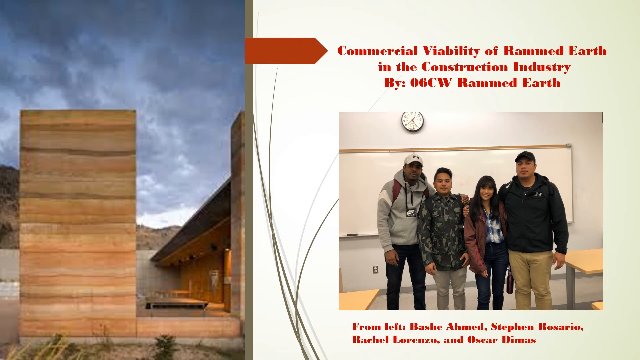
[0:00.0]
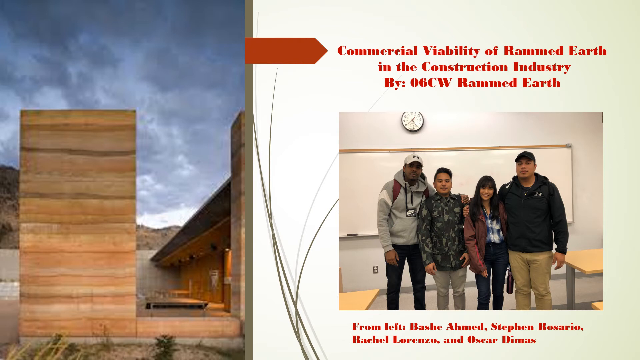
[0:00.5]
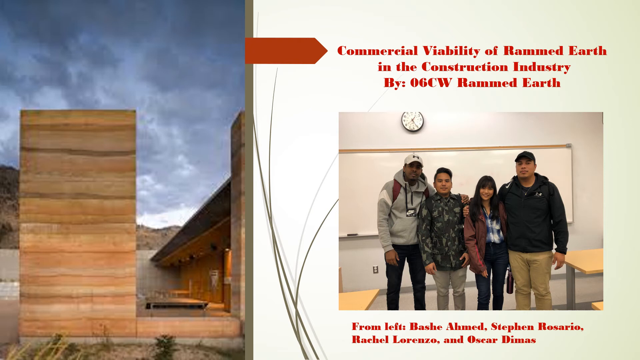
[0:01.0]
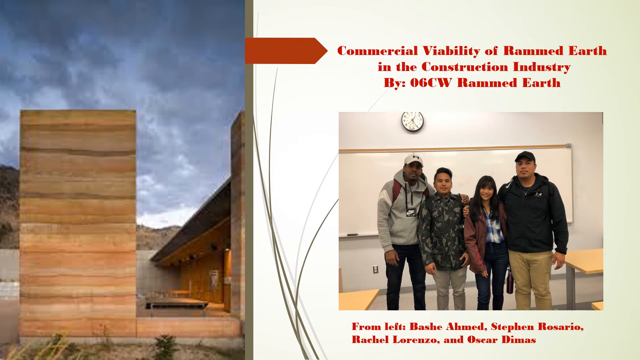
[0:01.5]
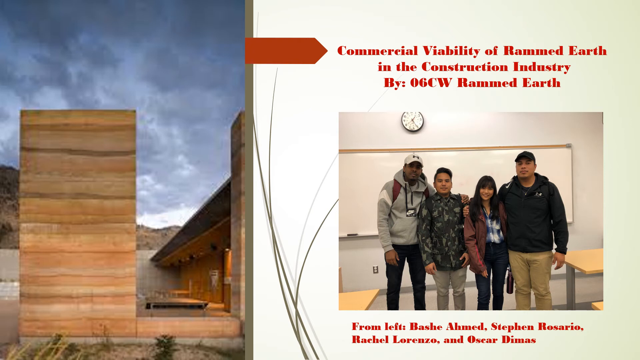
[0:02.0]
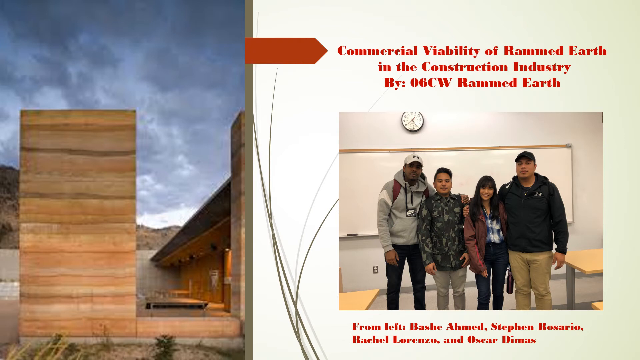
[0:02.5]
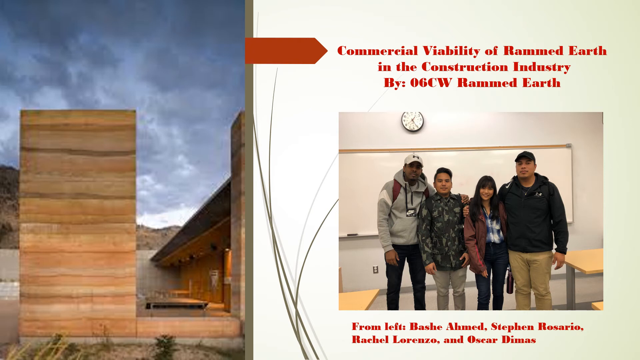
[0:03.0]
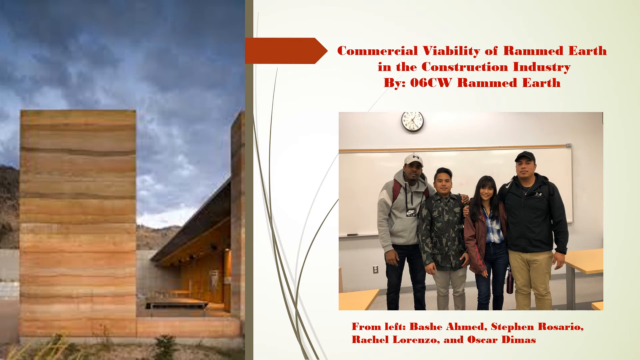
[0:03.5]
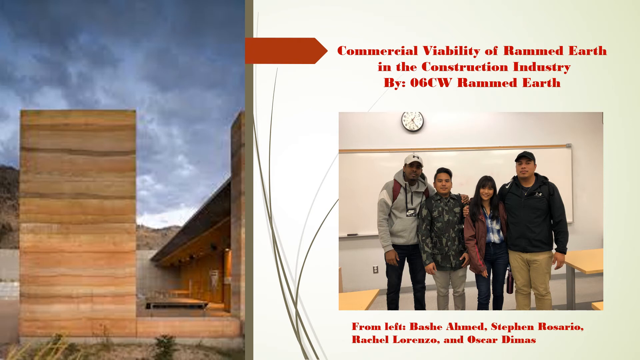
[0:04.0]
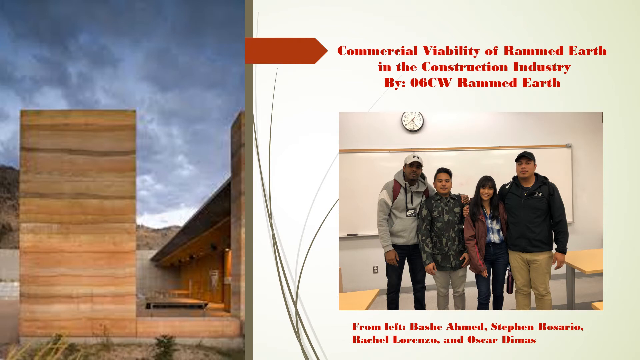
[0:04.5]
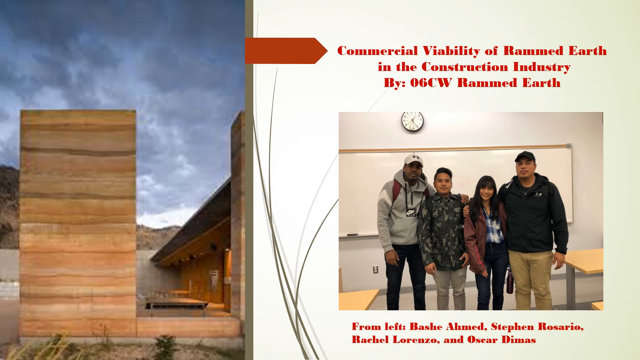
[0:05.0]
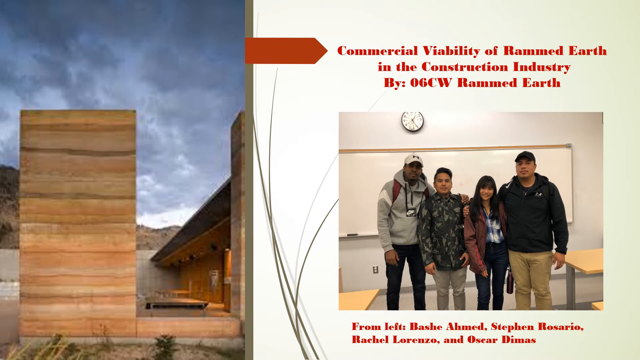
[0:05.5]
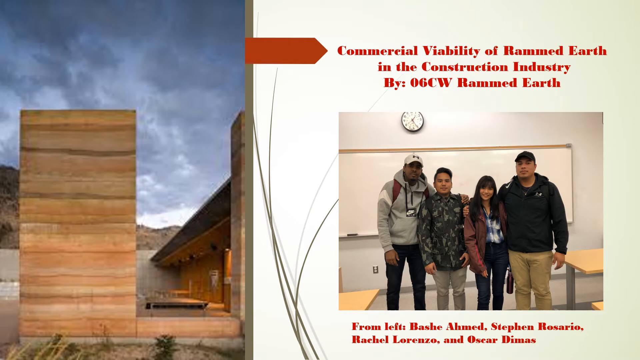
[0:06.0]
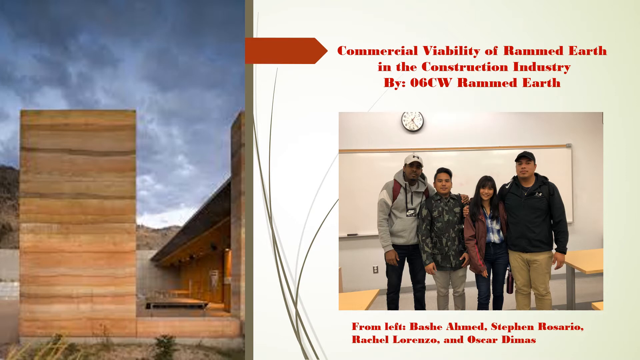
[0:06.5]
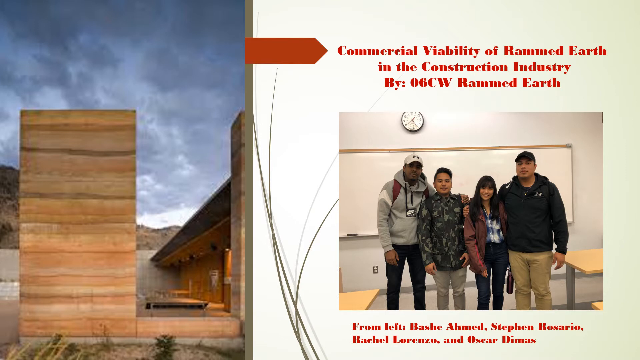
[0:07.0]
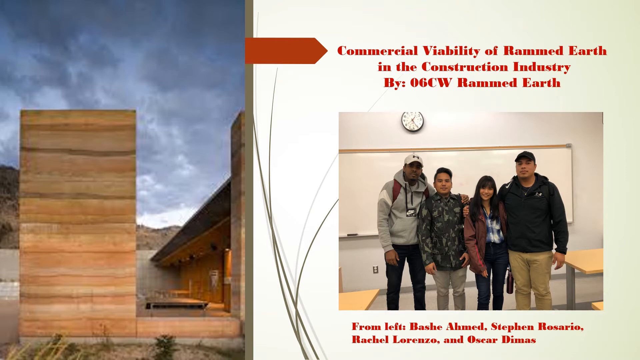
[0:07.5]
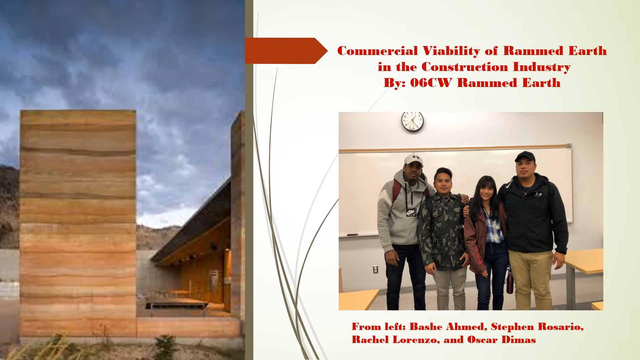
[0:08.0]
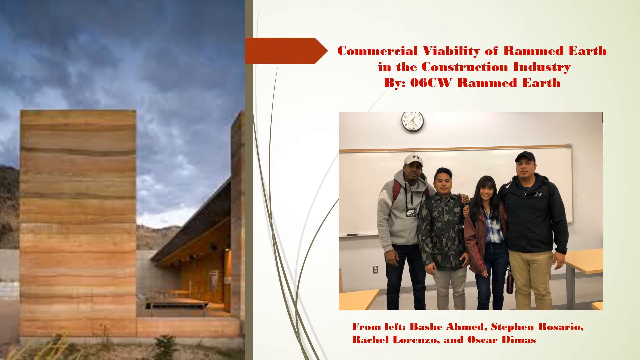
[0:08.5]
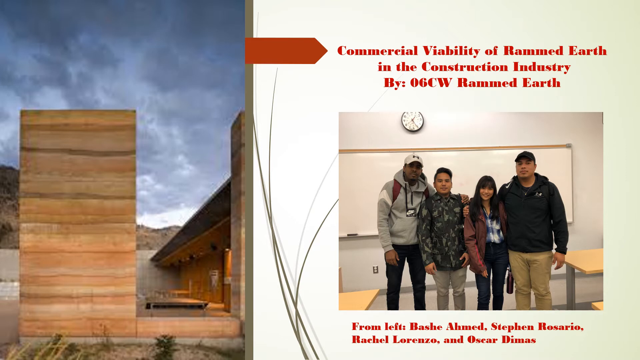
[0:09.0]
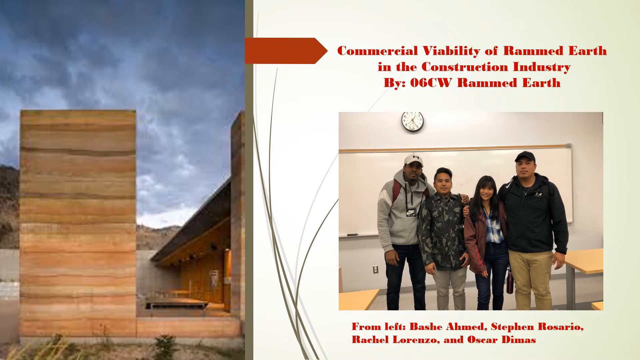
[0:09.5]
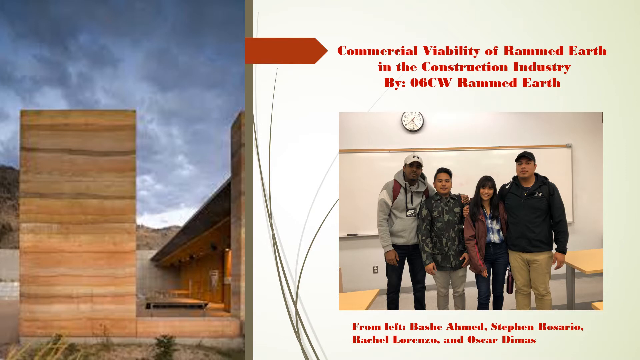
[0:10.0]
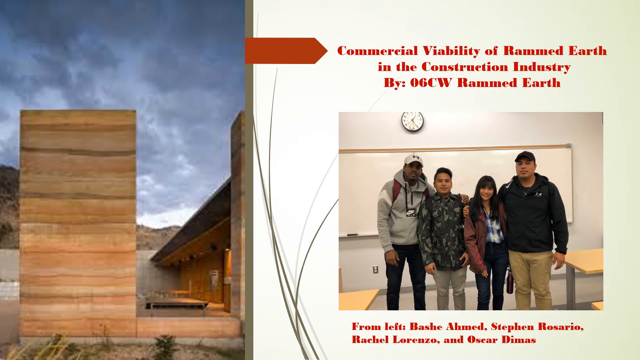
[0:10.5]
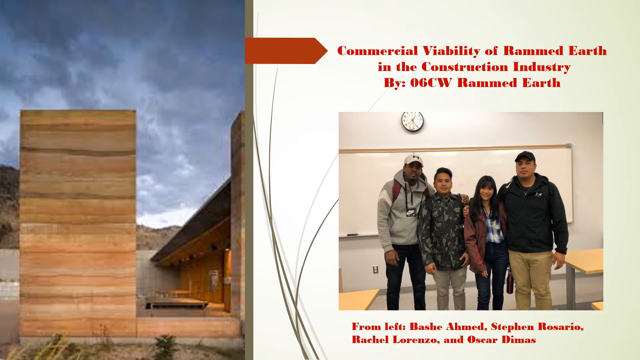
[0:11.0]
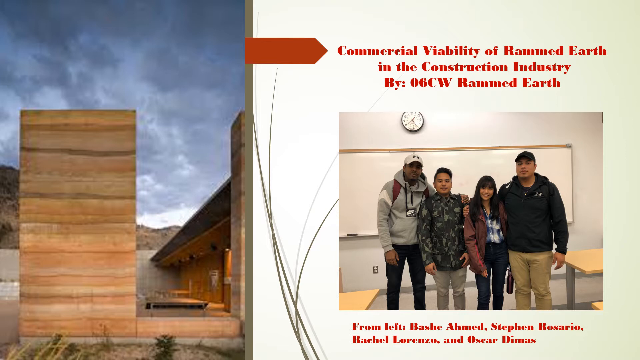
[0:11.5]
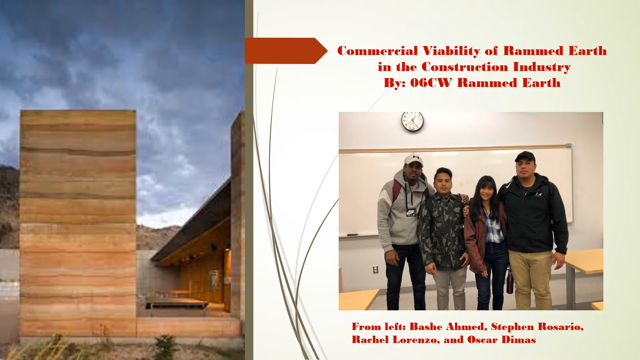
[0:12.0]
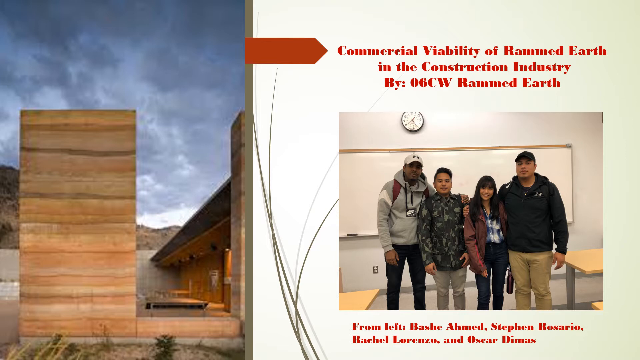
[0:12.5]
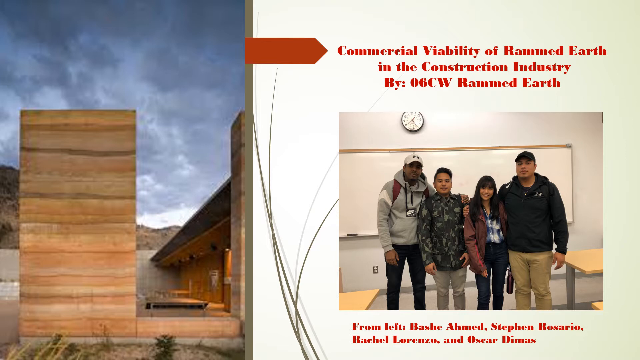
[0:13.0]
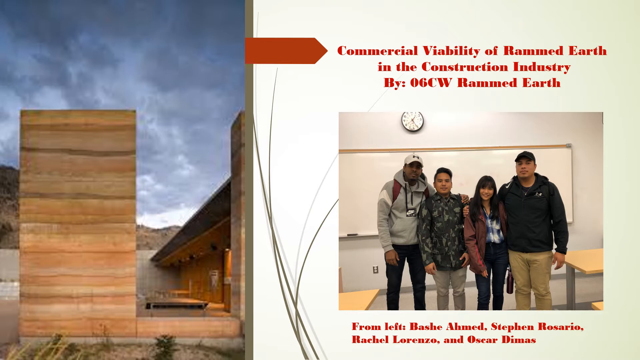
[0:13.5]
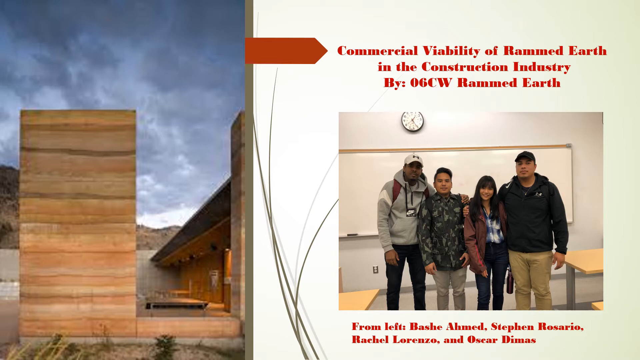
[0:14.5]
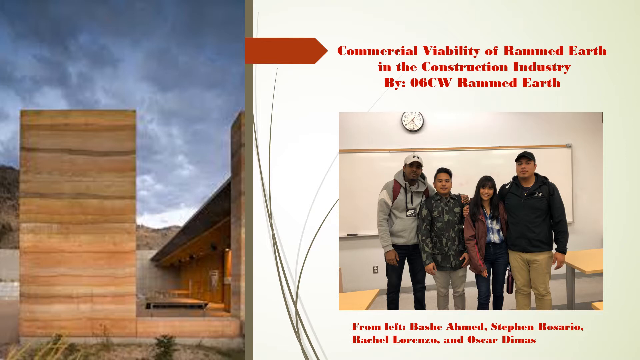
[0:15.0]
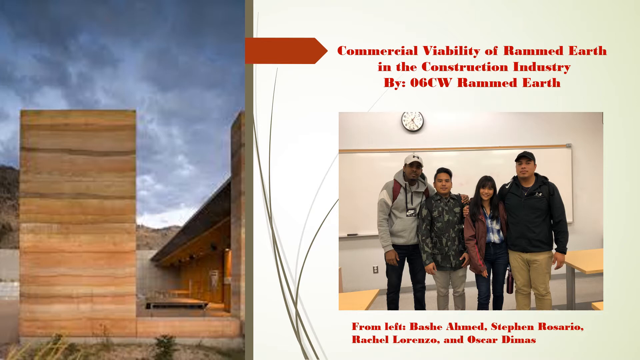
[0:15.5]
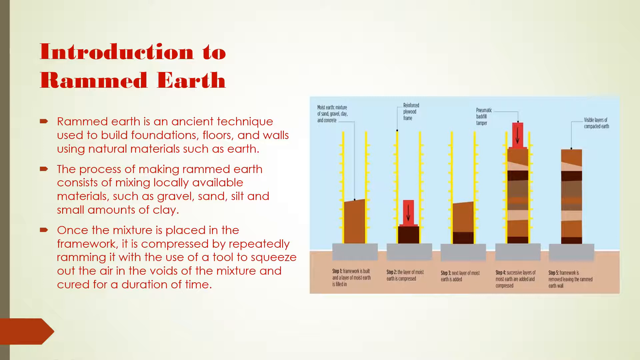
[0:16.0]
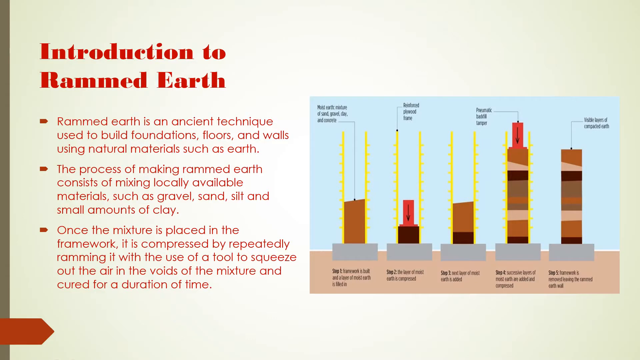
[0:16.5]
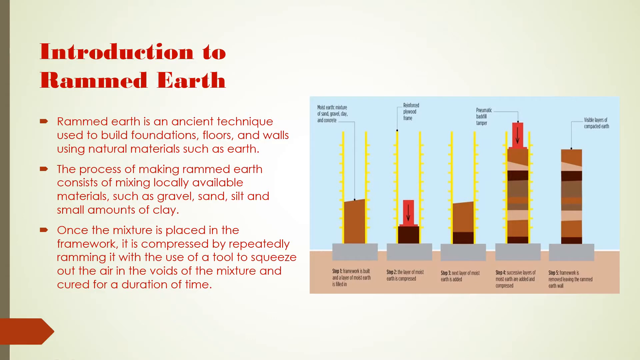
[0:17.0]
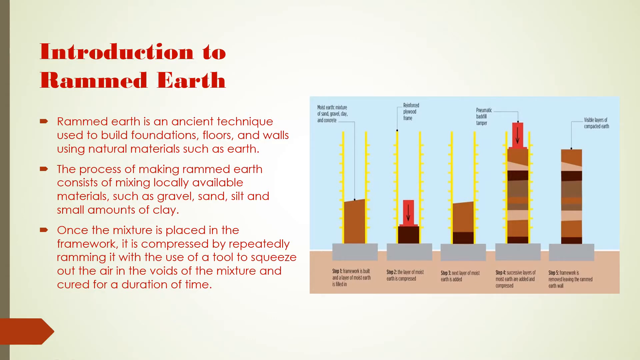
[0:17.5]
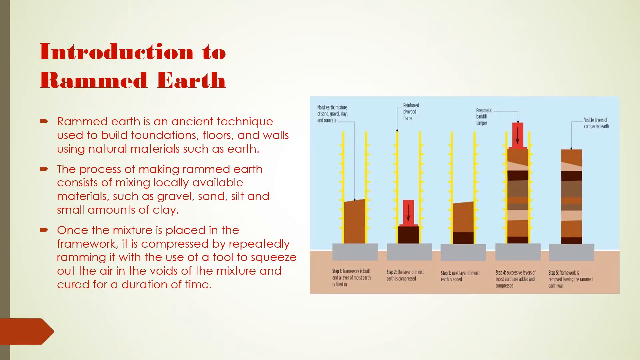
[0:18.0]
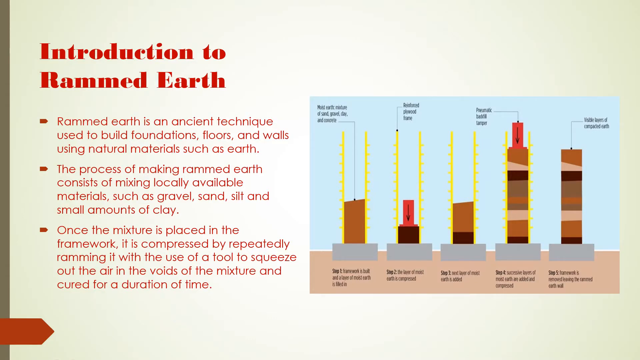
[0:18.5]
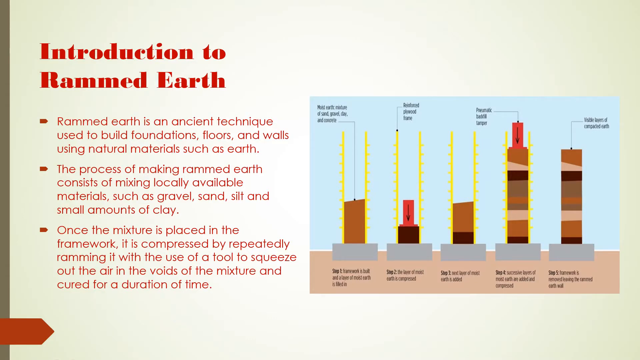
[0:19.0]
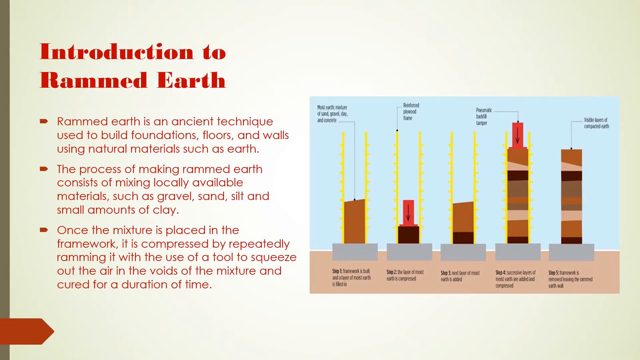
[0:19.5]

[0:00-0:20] An image shows four people on the right side, three men and a woman. Text above the image reads "Commercial Viability of Rammed Earth in the Construction Industry. By 06CW Rammed Earth." At the bottom of the image it says "from left, Bash Ahmed, Steven Rosario, Rachel Lorenzo, and Oscar Dimas." On the left side of the image is a picture of a wooden structure, and on the right side is what looks to be a building. The video then pans to a new slide titled "Introduction to Rammed Earth" with three bullet points. The first reads "Rammed Earth is an ancient technique used to build foundations, floors, and walls using natural materials such as earth." The second reads "the process of making rammed earth consists of mixing locally available materials such as gravel, sand, silt, and small amounts of clay." The third reads "once the mixture is placed in the framework it is compressed by repeatedly ramming it with the use of a tool to squeeze out the air in the voids of the mixture and cured for a duration of time." On the right is a diagram showing the process explained in the bullet points.